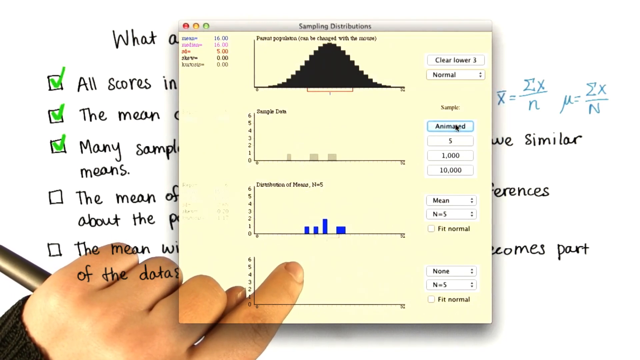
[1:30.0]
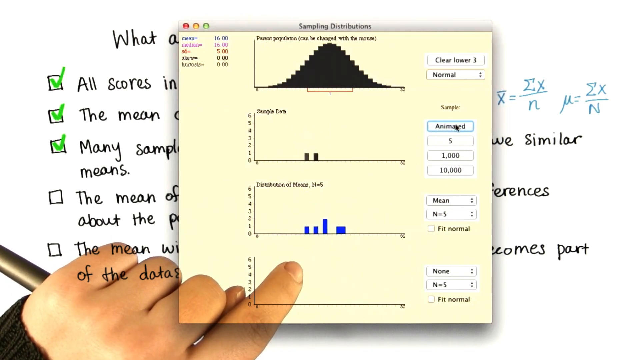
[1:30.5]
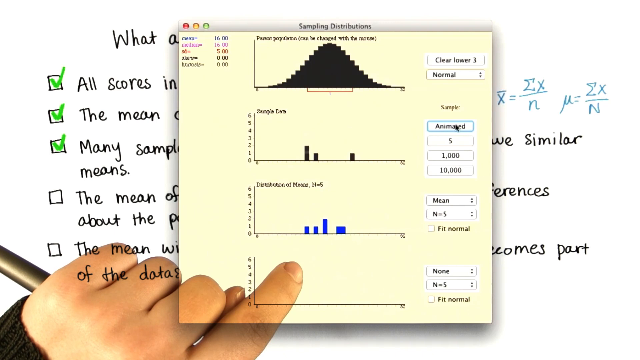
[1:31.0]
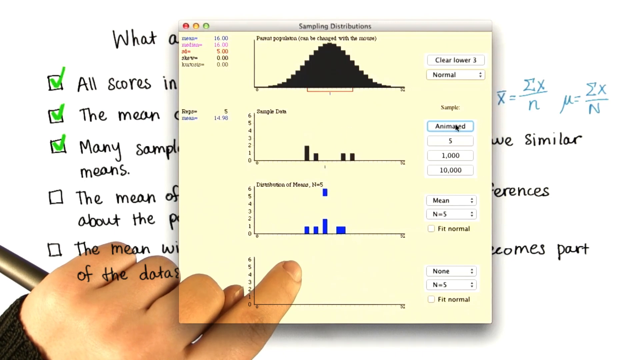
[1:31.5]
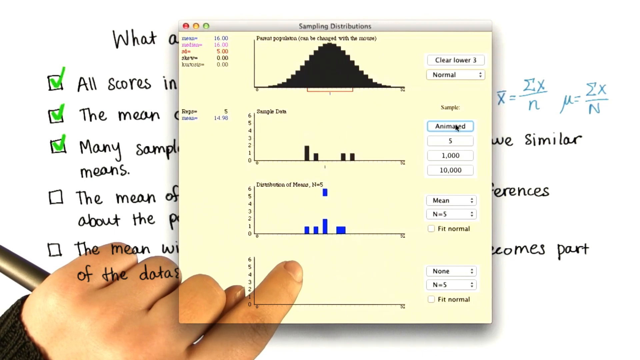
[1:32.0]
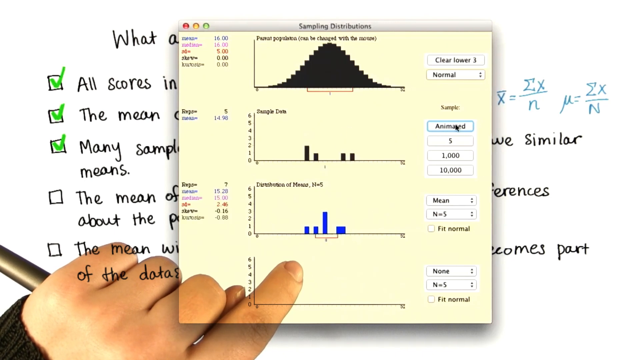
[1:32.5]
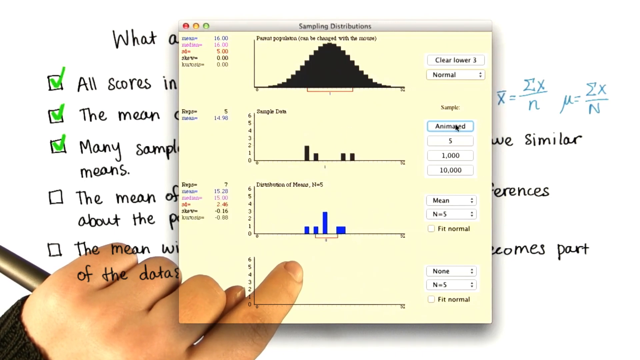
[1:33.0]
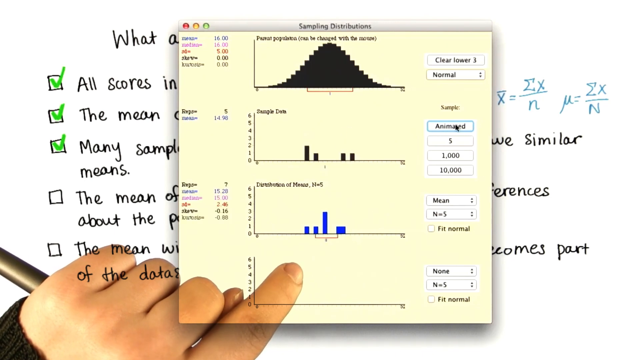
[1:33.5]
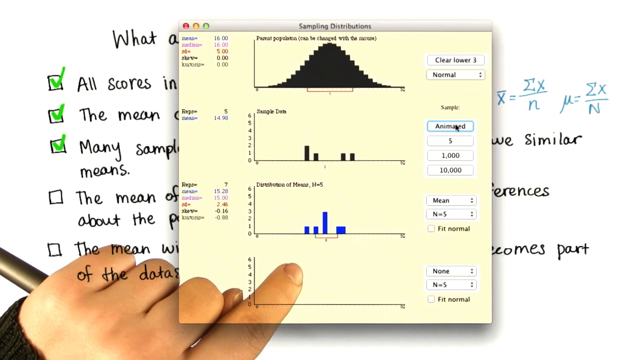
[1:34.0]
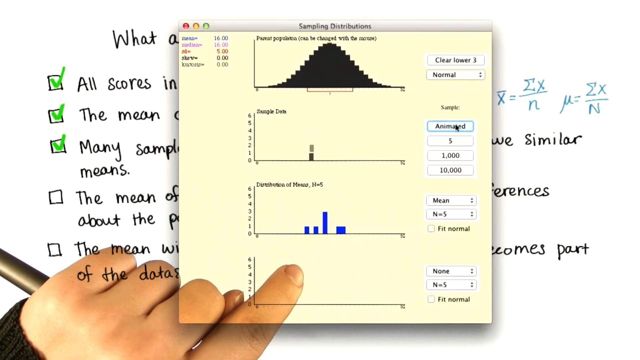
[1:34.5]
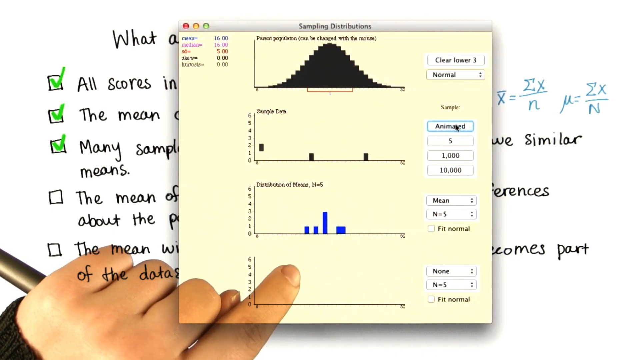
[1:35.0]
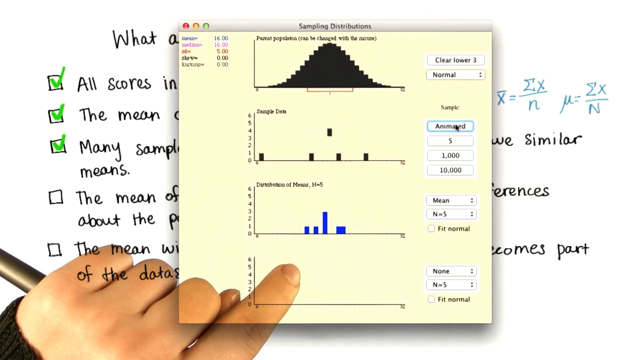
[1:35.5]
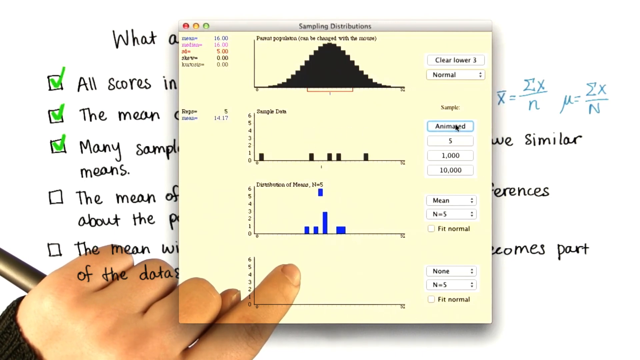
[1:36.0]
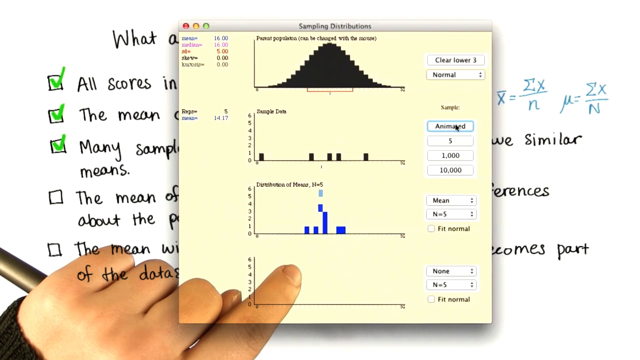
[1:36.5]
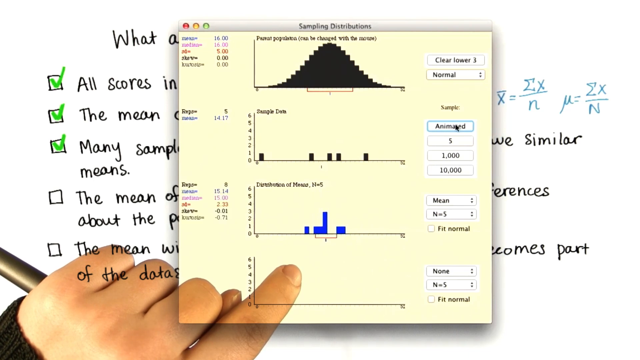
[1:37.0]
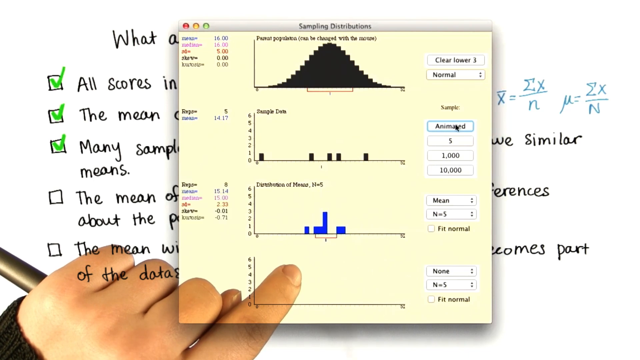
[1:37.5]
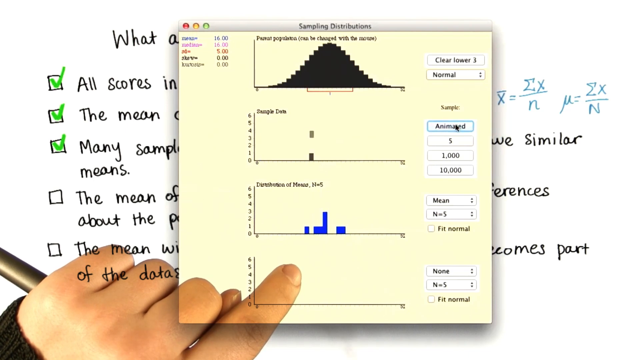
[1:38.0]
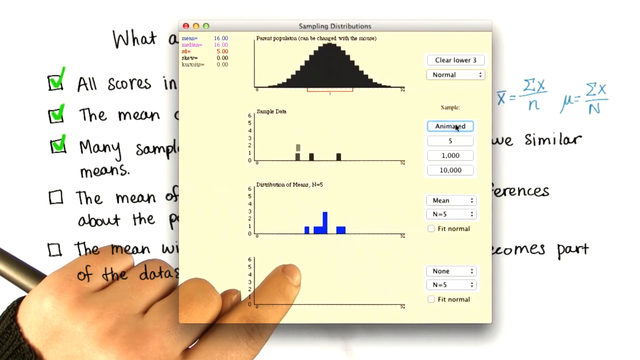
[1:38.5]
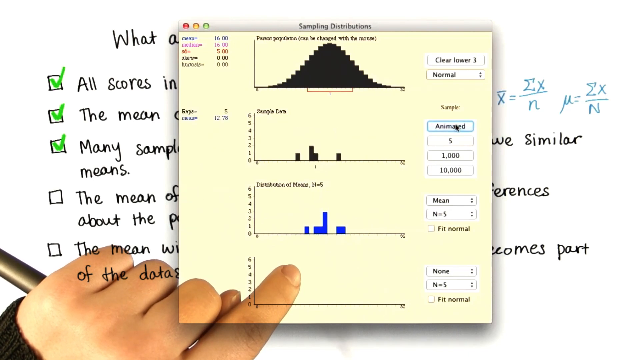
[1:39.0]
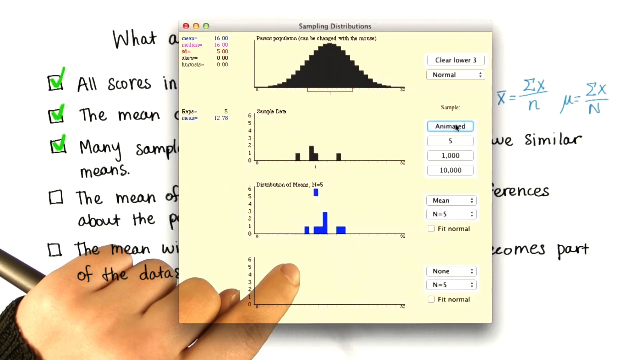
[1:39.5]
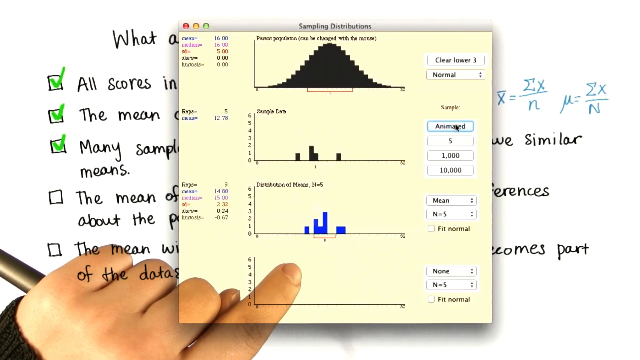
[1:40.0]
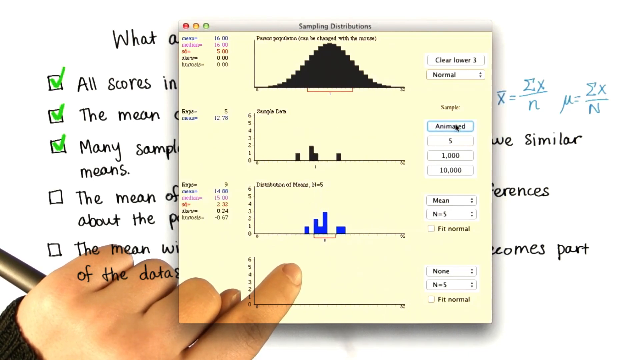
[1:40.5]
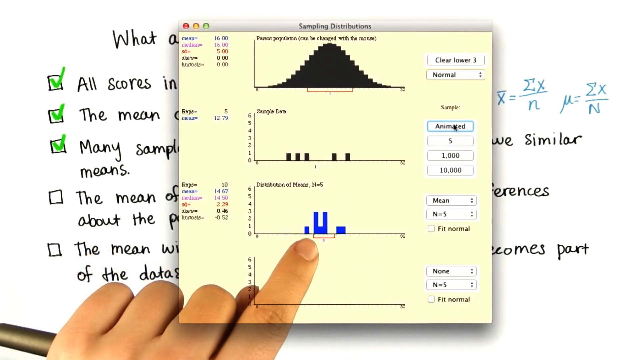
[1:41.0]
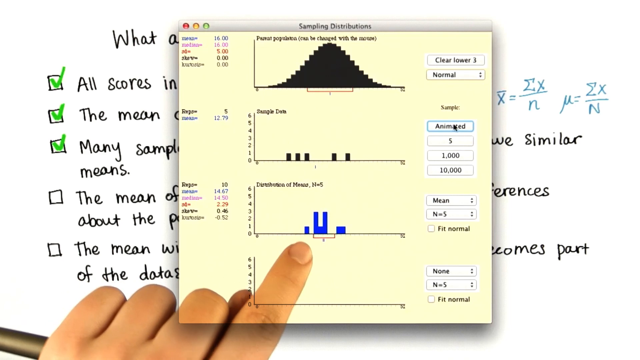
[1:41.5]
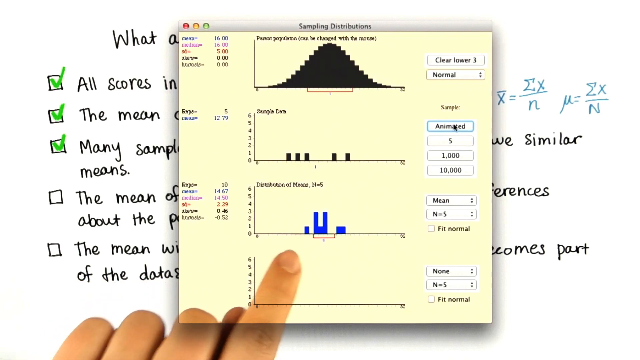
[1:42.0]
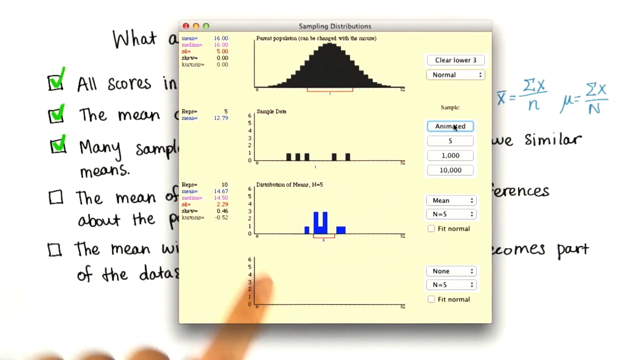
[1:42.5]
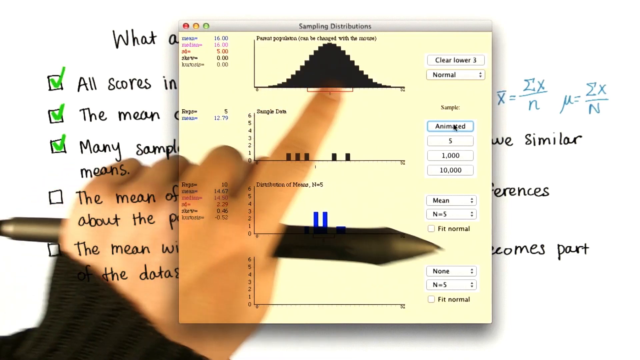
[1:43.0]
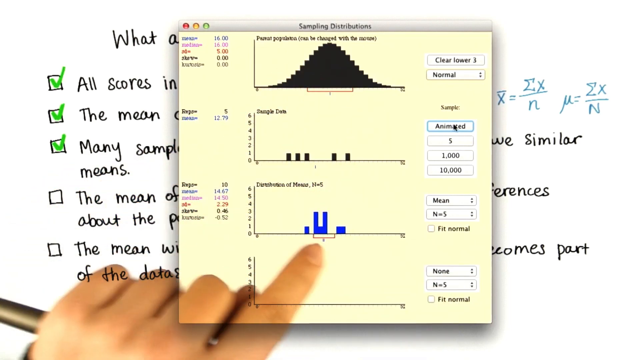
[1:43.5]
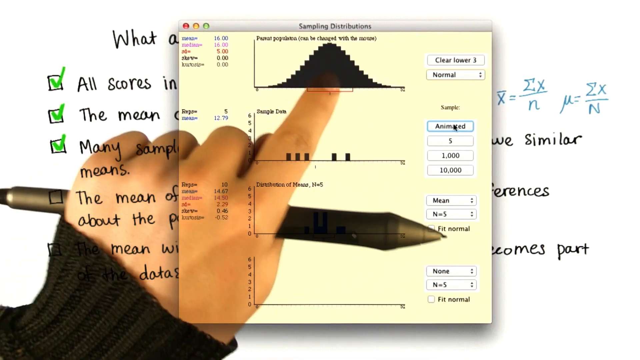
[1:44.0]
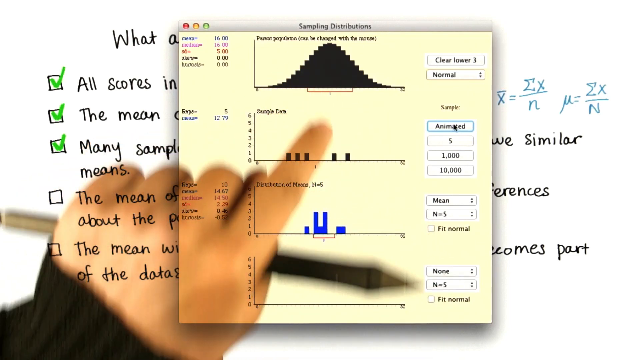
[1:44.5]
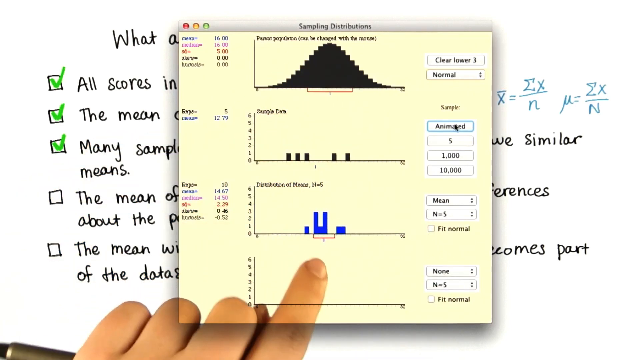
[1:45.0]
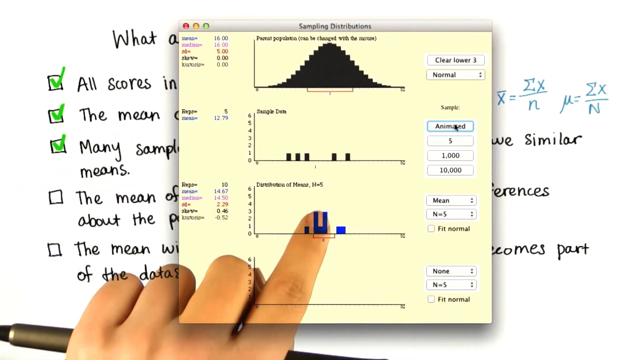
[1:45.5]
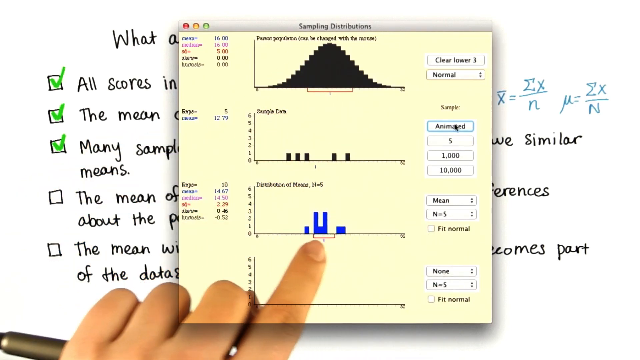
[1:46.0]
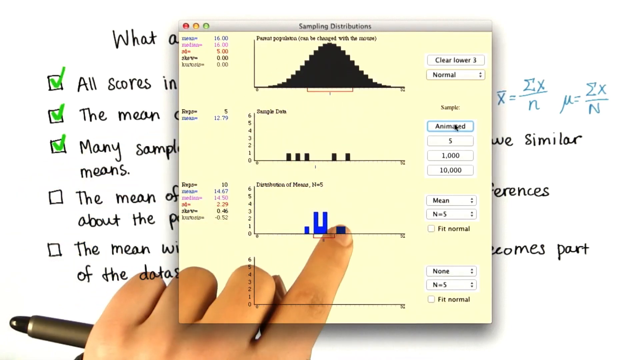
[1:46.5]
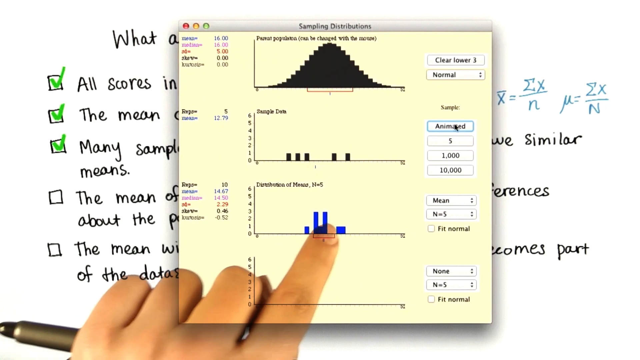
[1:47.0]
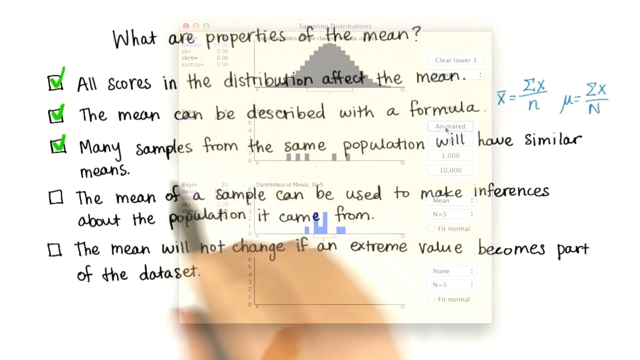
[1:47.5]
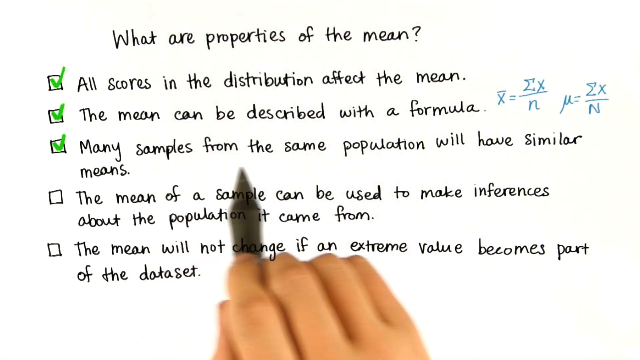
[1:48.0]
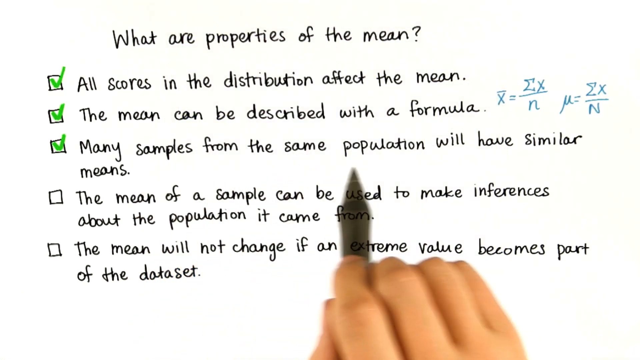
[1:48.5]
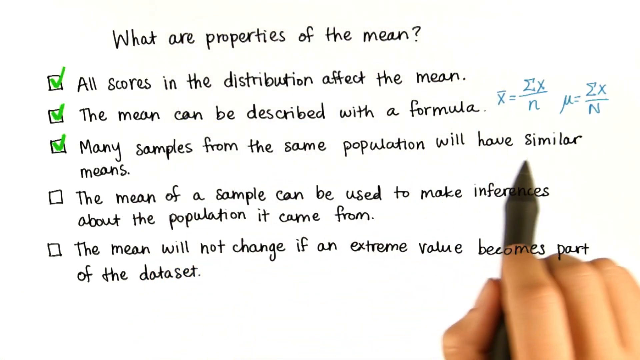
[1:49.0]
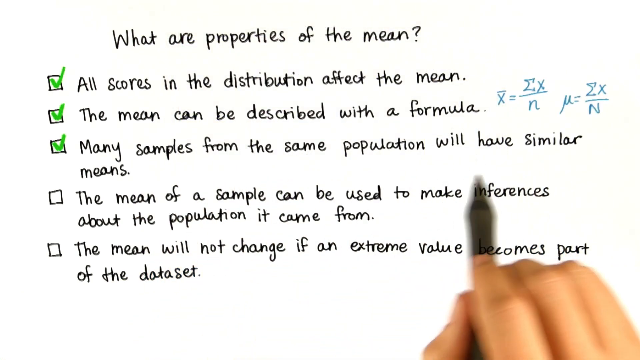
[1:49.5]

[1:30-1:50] A person wearing a black shirt holds a green pen in his left hand and points to a large graph that seemingly shows up on a Mac computer. The window is titled "Sampling Distribution" and contains four graphs. The top one already has many points plotted, forming a slope with the middle area highest and the far left and far right areas having the fewest points. The second and third have far fewer points; the person clicks and animates them, and more points drop. He circles his index finger around the top and seems to draw a comparison. The view then zooms back to the page that says "what are the properties of the mean", and he moves the pen along the third bullet point, about many samples from the same population having similar means.